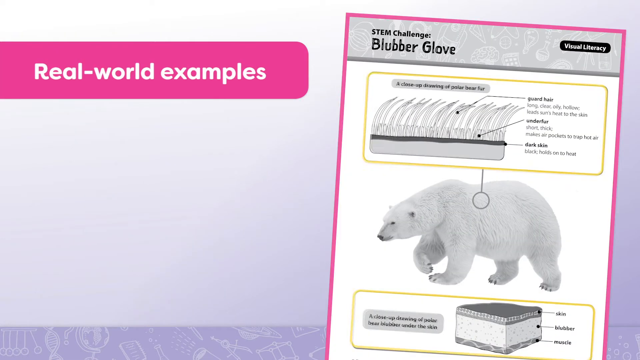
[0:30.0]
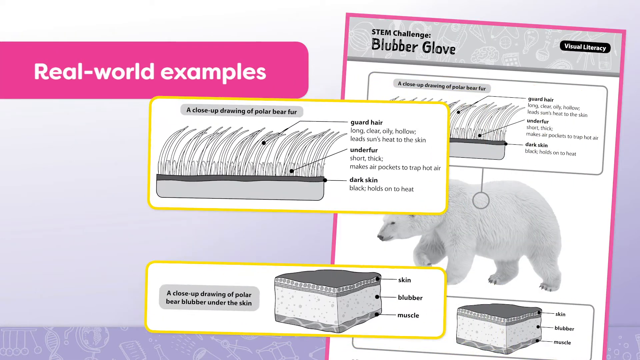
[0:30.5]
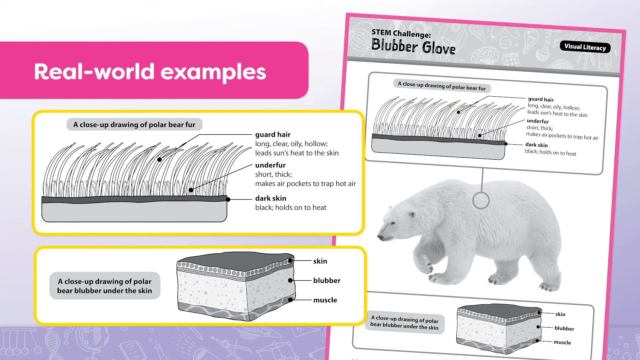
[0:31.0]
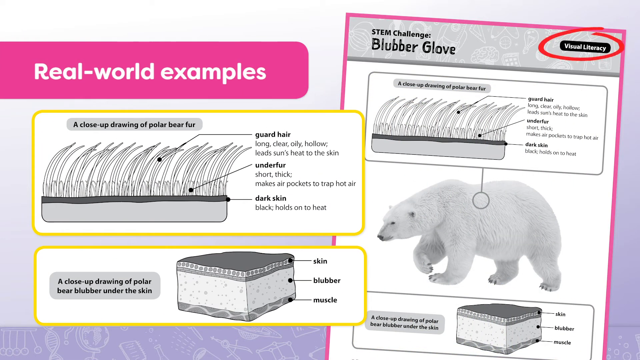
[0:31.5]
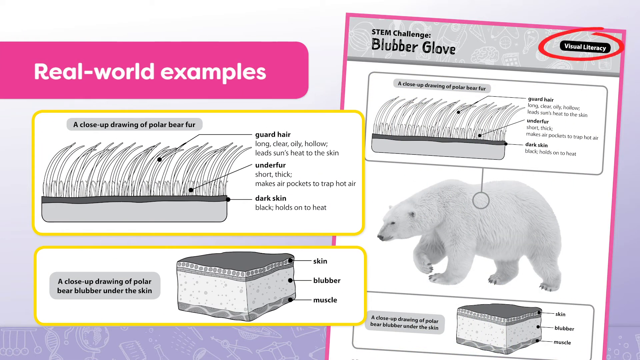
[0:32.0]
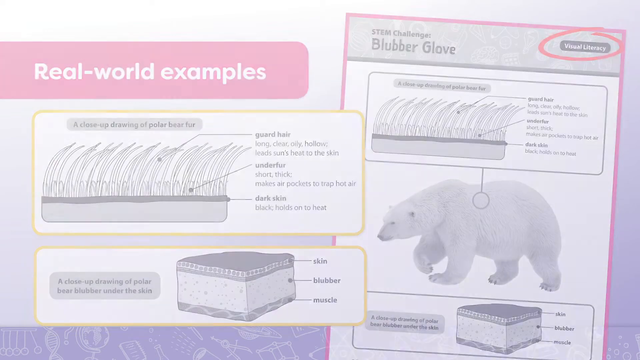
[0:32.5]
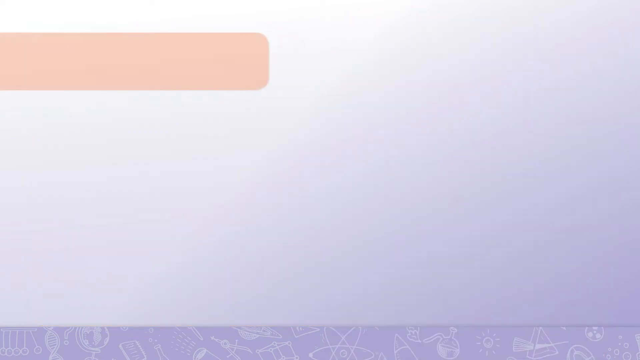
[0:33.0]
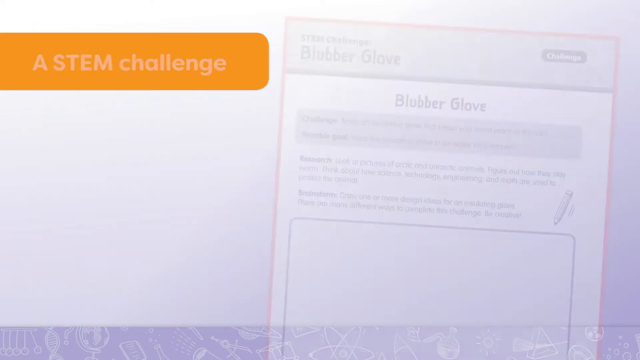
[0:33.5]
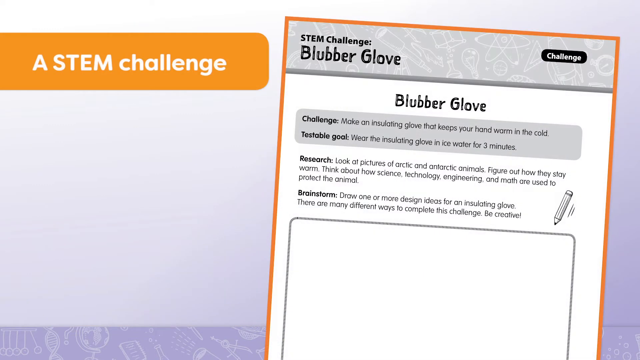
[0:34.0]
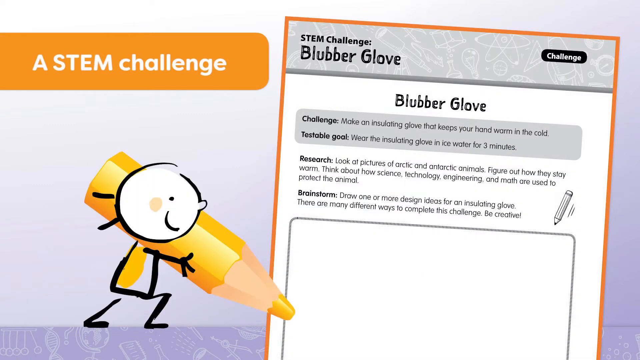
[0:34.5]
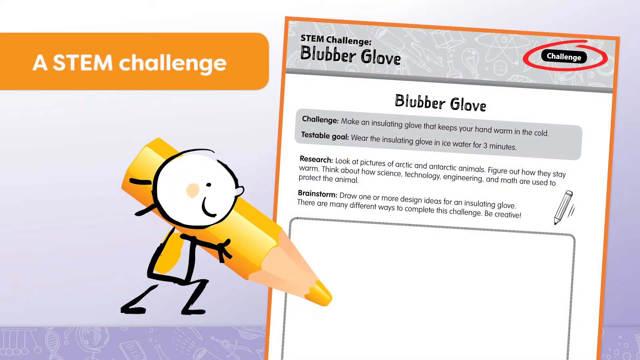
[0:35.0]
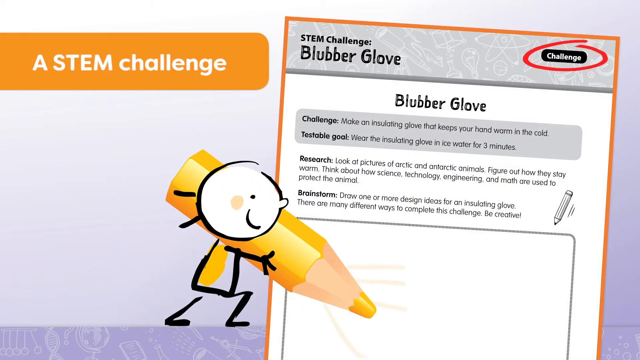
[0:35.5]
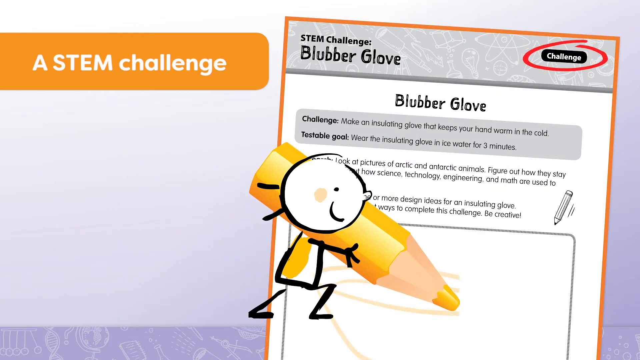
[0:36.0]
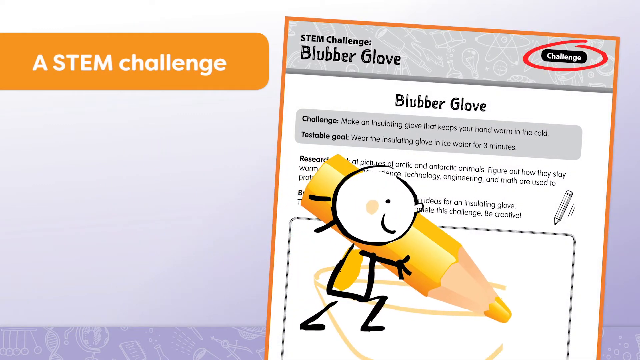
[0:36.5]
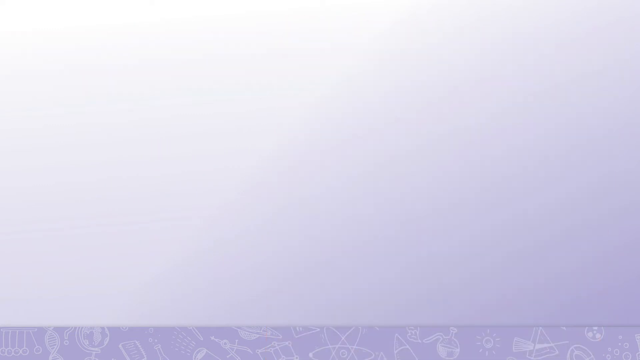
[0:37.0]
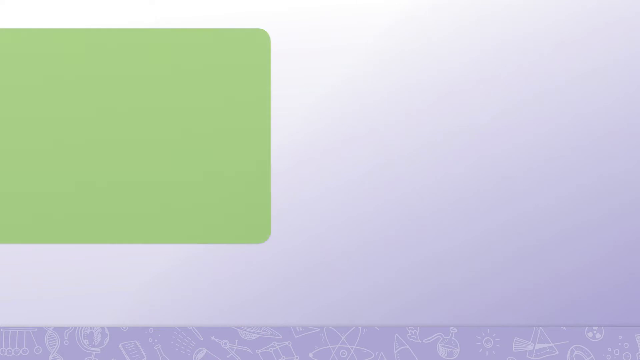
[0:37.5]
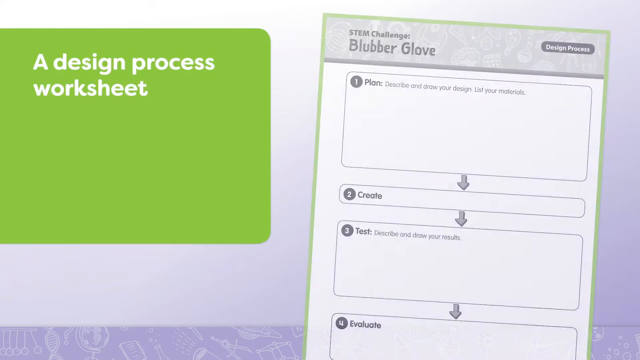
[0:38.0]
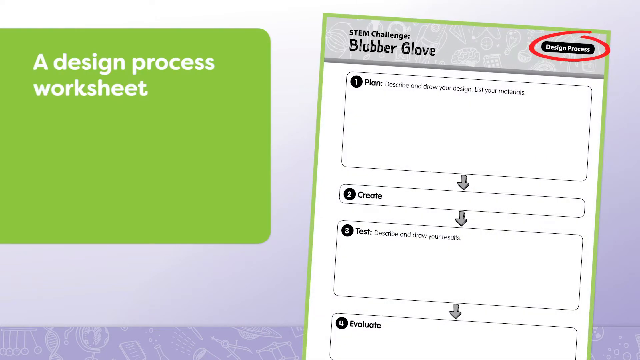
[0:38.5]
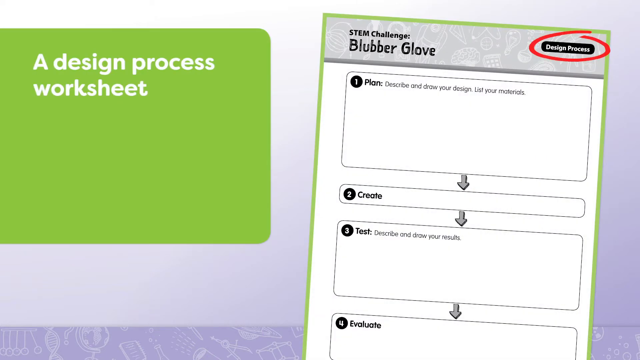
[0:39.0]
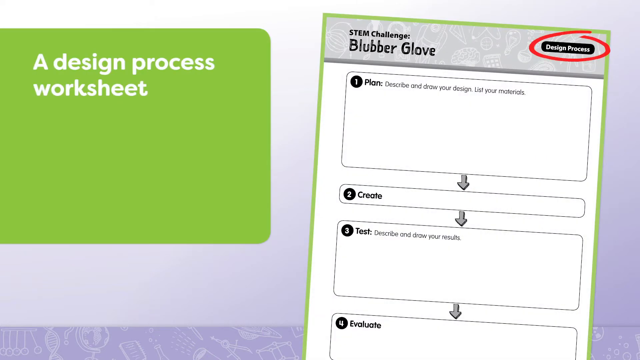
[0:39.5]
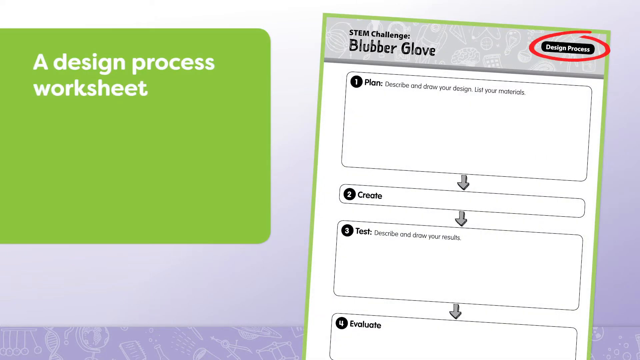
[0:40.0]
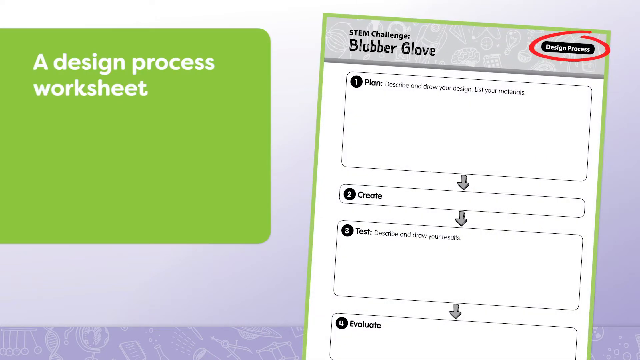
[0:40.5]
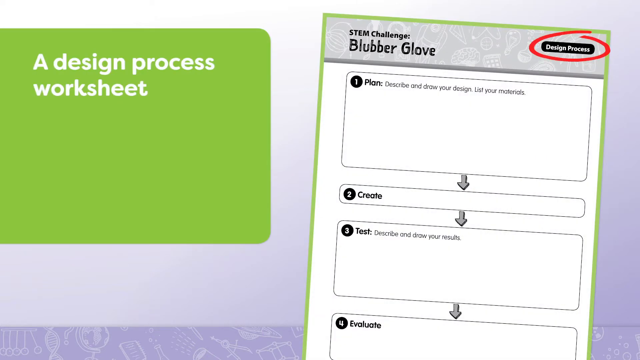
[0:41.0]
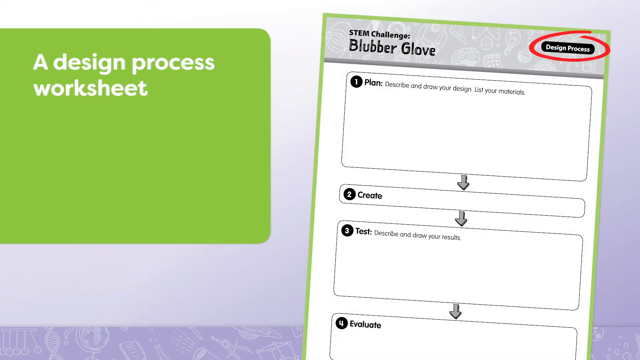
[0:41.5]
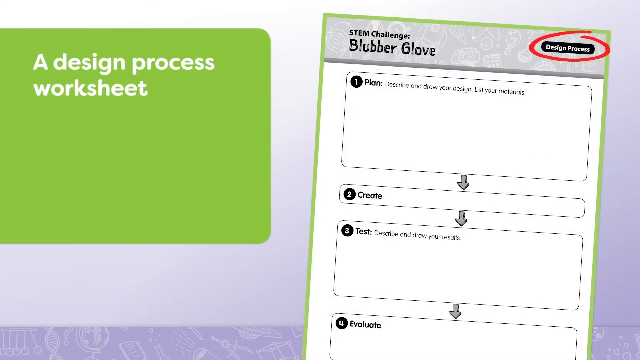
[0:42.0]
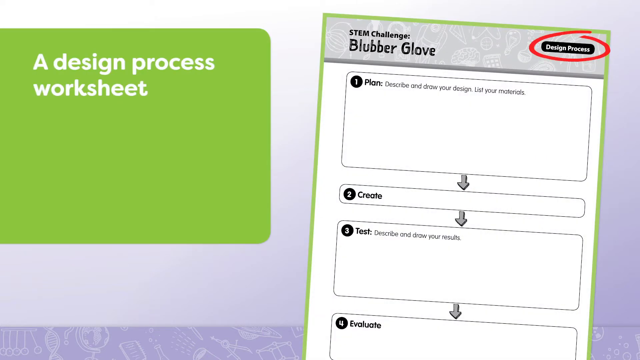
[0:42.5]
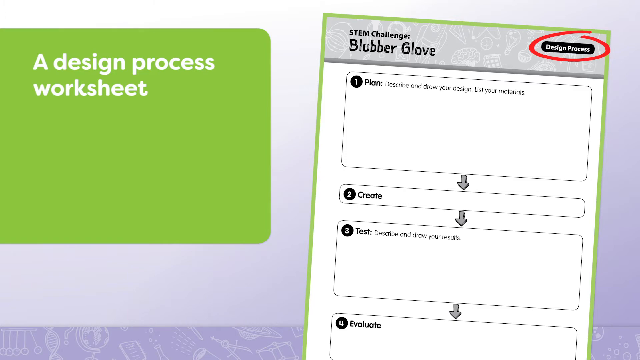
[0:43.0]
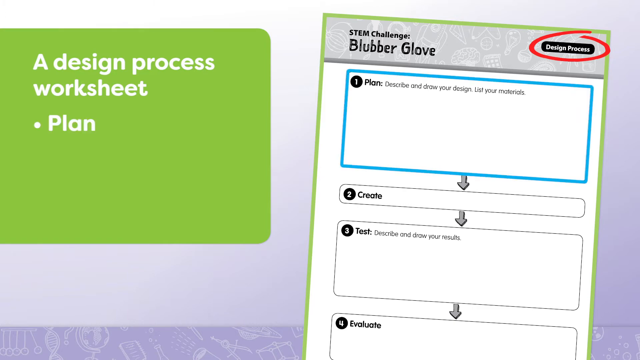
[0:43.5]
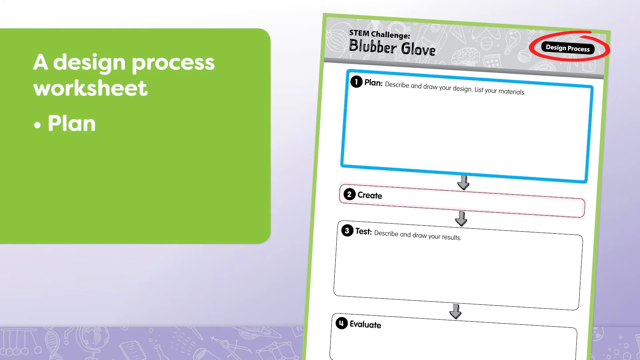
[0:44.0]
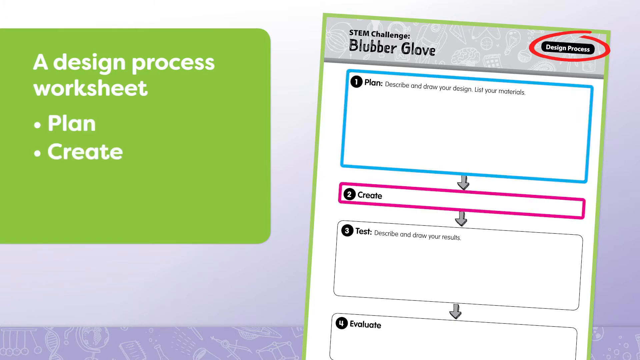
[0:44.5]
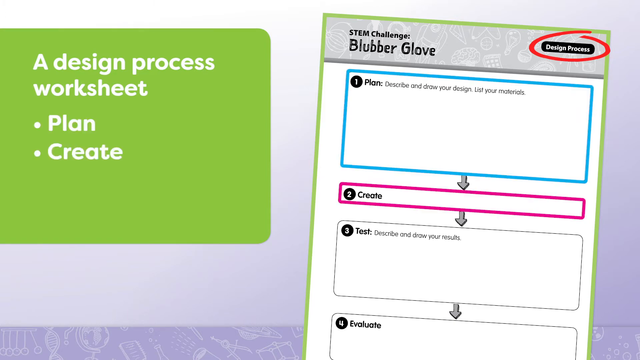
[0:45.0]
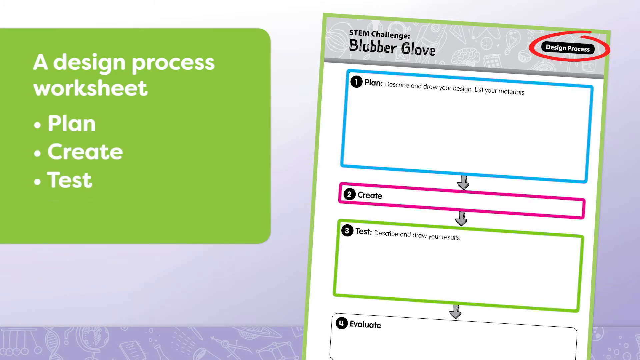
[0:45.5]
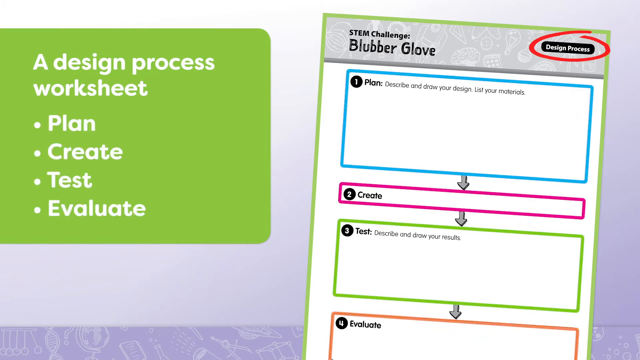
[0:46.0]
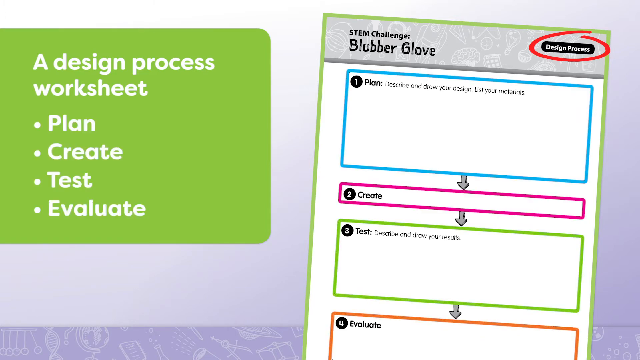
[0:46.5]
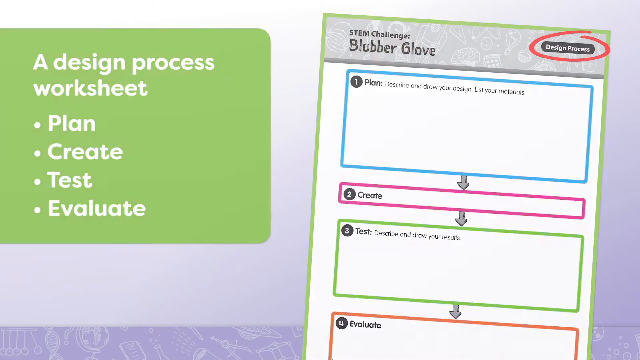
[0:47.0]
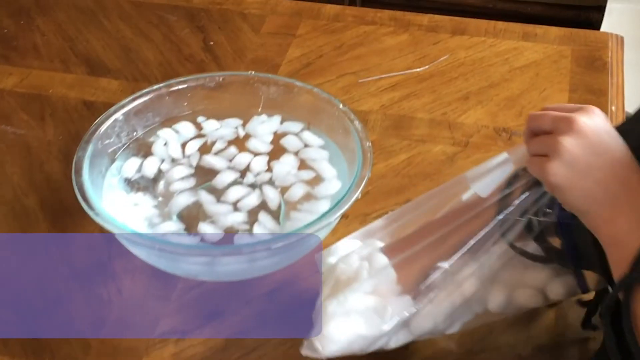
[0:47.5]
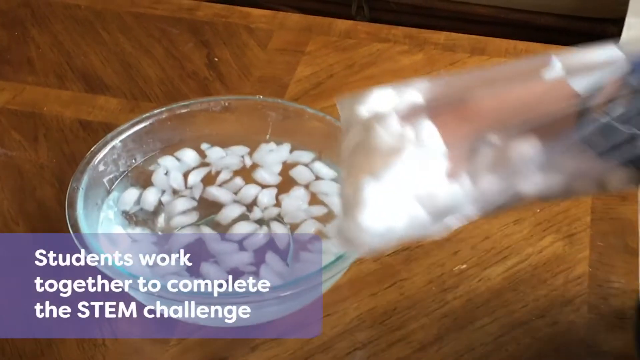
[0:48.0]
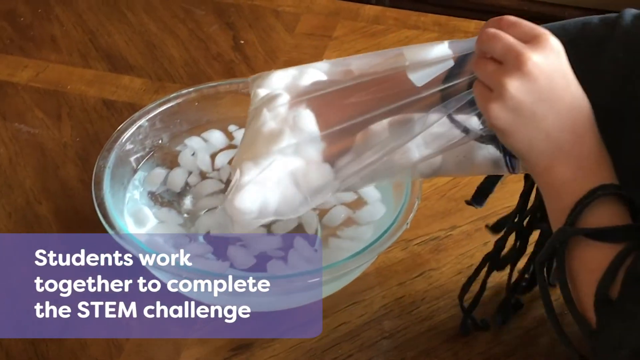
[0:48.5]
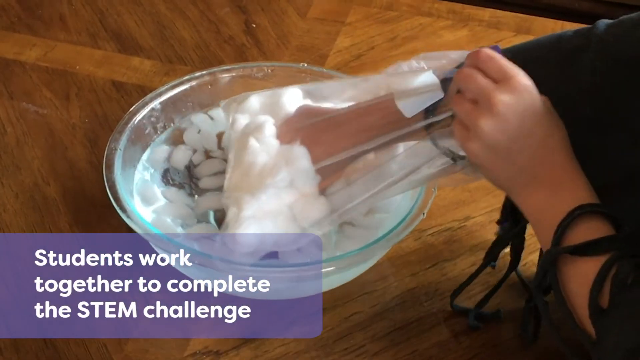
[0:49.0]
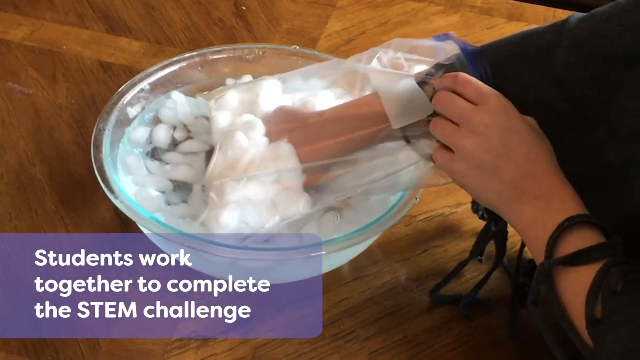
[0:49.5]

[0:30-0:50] A screen shows a STEM book with text outlining what is inside, for grade 1 to 6. STEM challenges are shown next. The following page shows kids sitting at one table, with two of them standing up, all looking at the book. Text reads "15 STEM challenges," "low prep lessons," and "guide students through the entire STEM process." A page then shows a white bear with a subtitle, followed by many pictures of the bear with arrows, seemingly going from stage to stage. A design process worksheet follows, with text reading "plan, create and test," apparently instructions for planning the STEM work.